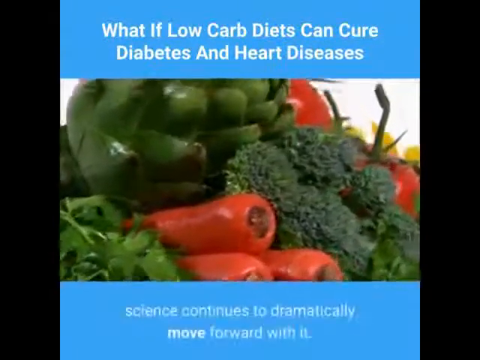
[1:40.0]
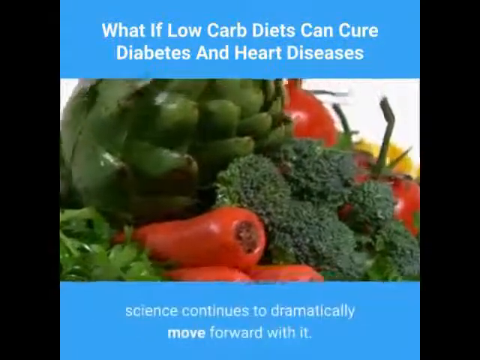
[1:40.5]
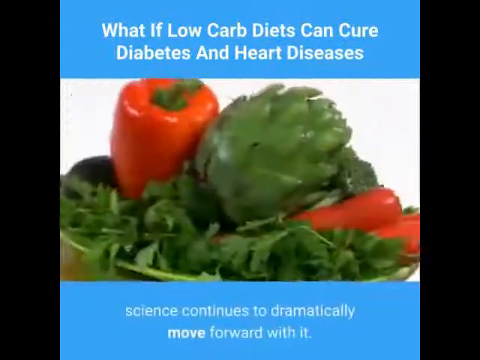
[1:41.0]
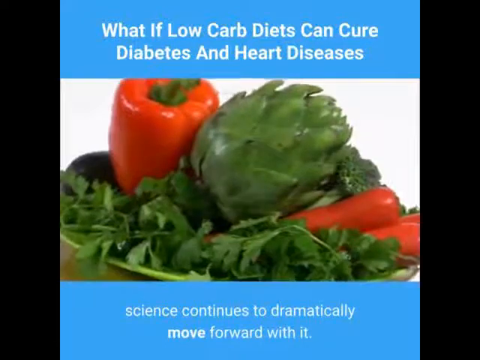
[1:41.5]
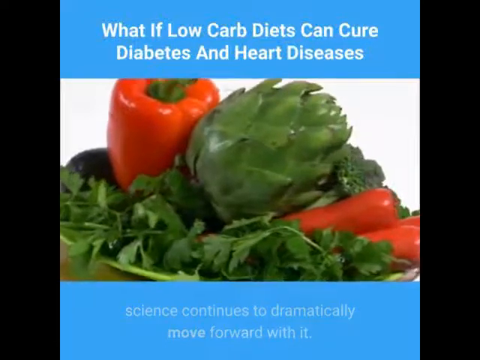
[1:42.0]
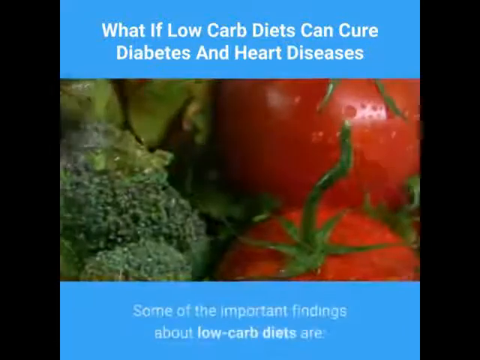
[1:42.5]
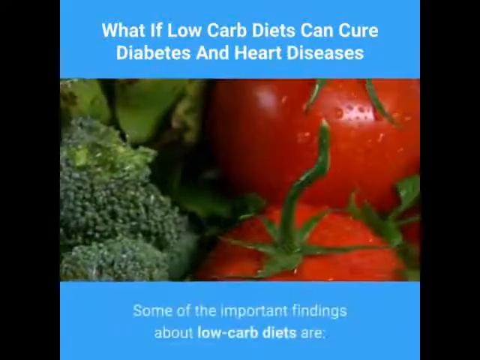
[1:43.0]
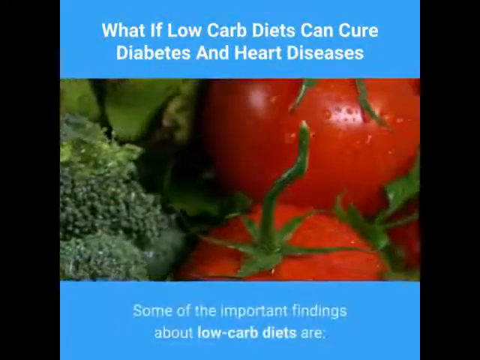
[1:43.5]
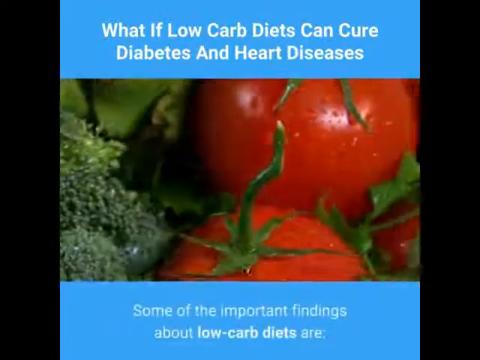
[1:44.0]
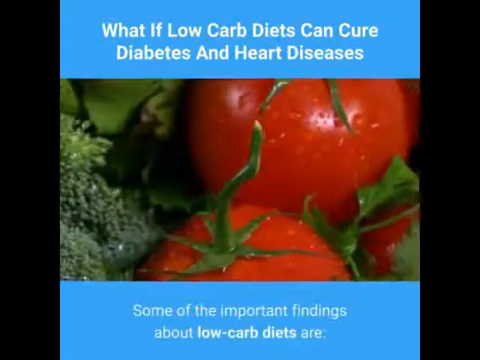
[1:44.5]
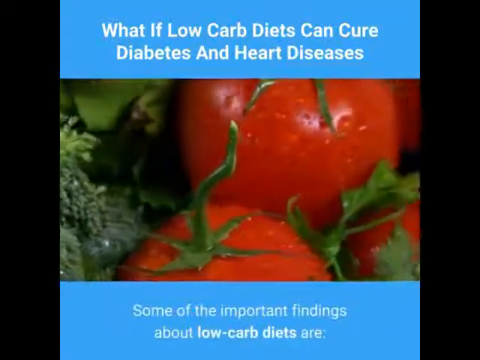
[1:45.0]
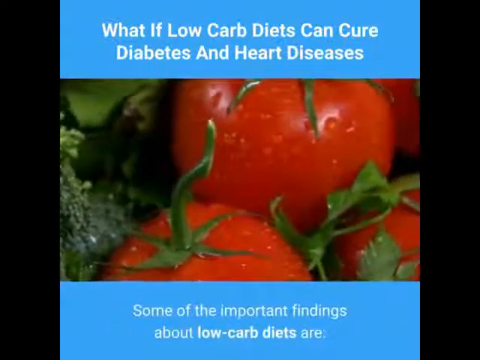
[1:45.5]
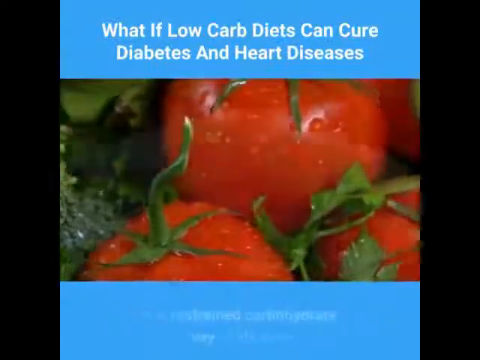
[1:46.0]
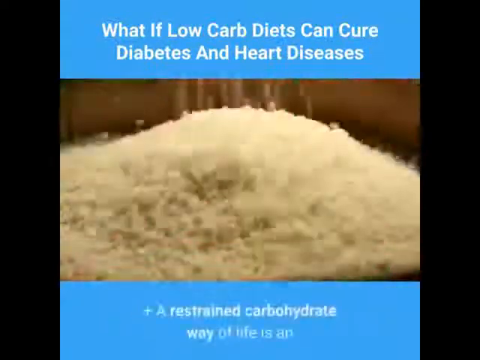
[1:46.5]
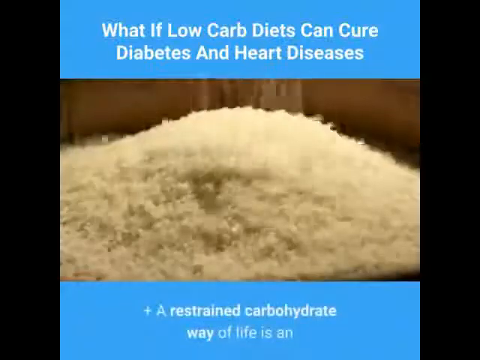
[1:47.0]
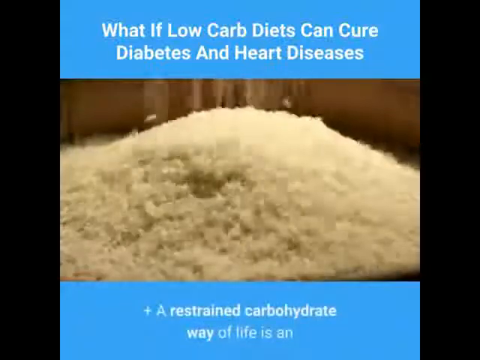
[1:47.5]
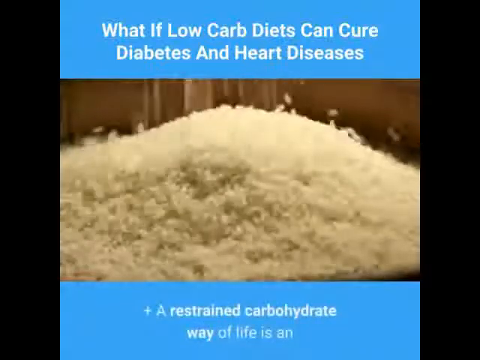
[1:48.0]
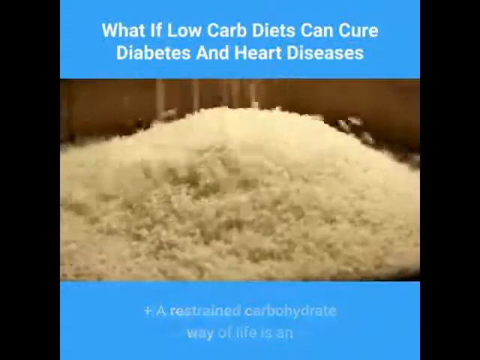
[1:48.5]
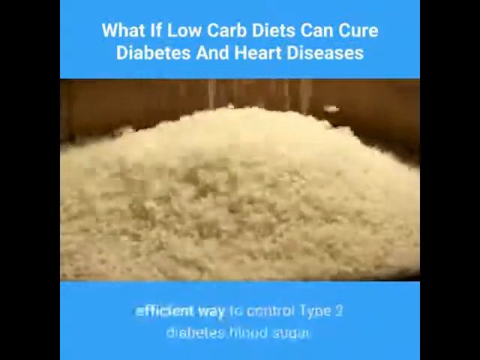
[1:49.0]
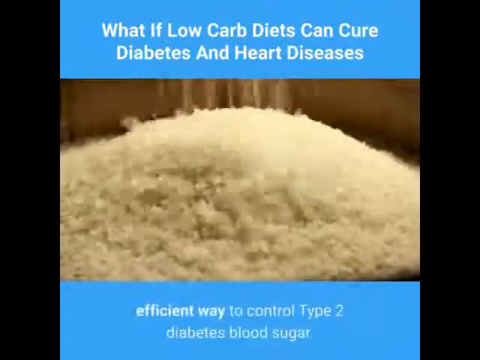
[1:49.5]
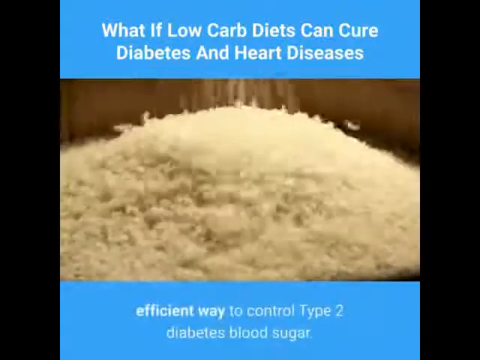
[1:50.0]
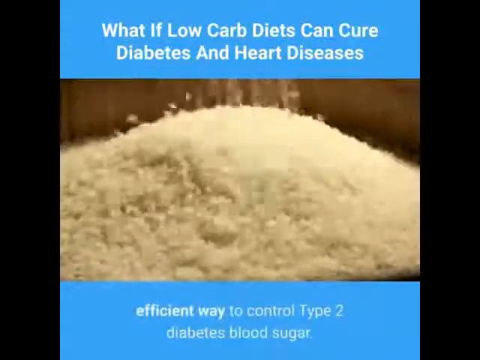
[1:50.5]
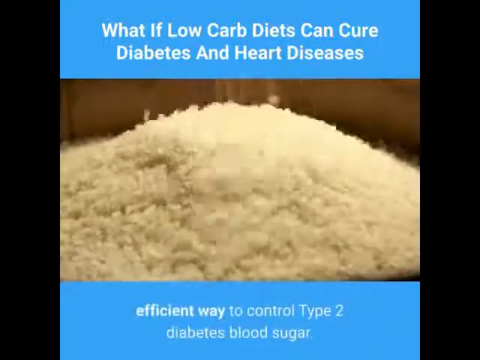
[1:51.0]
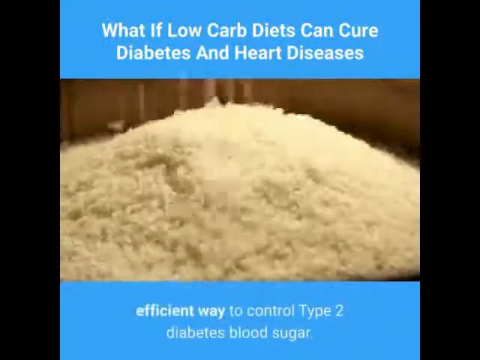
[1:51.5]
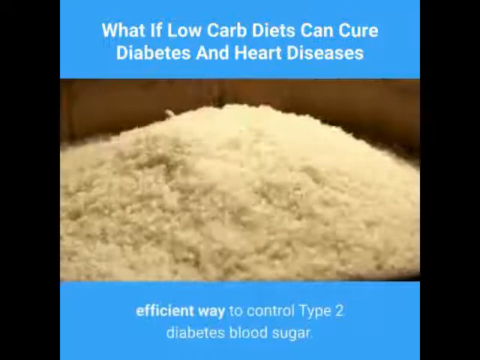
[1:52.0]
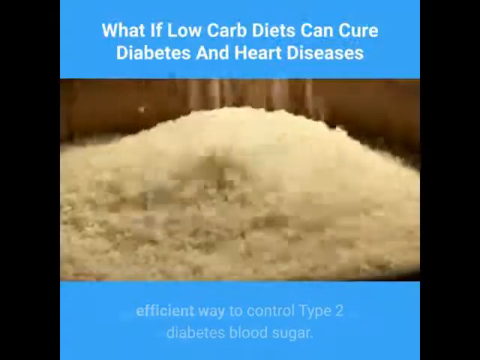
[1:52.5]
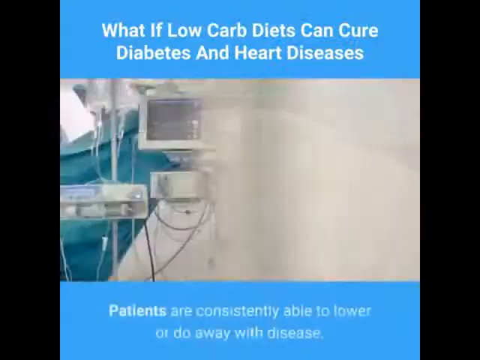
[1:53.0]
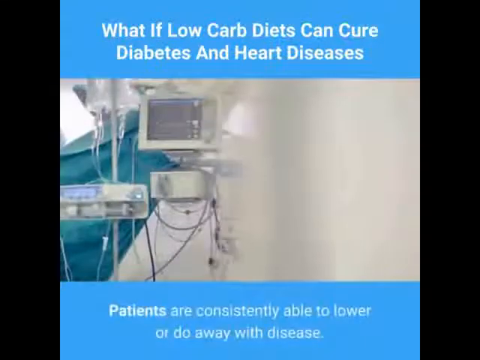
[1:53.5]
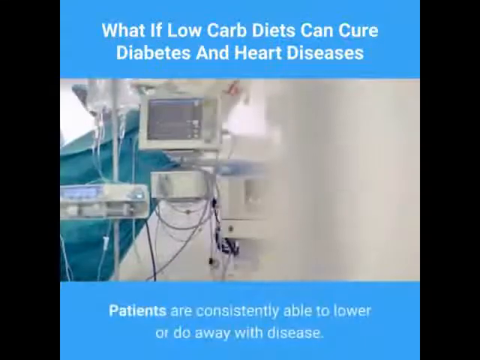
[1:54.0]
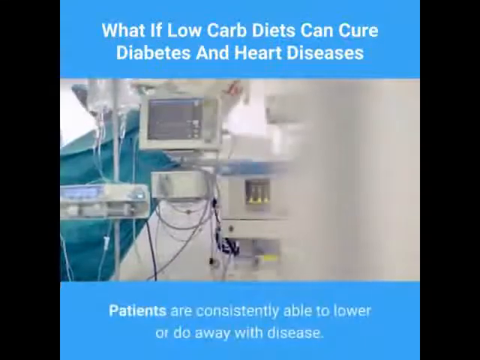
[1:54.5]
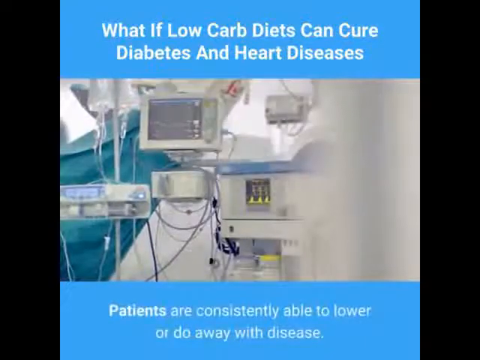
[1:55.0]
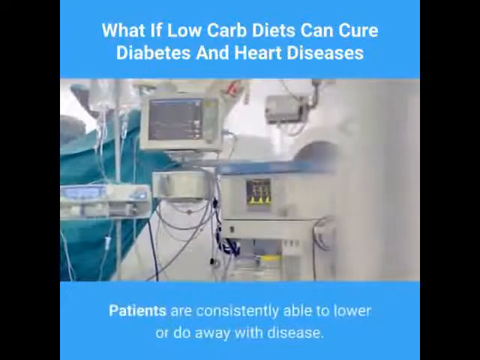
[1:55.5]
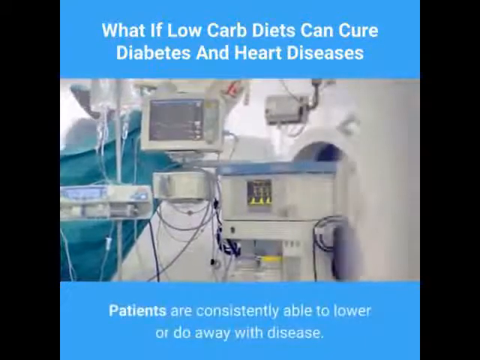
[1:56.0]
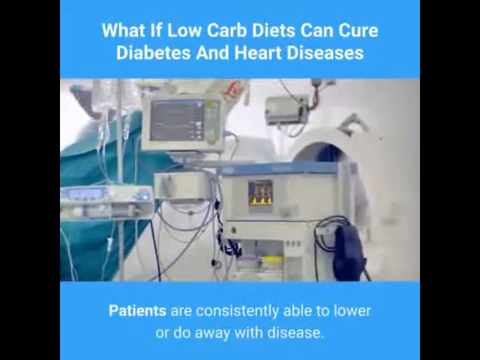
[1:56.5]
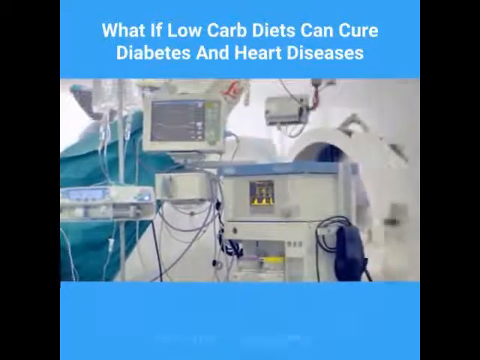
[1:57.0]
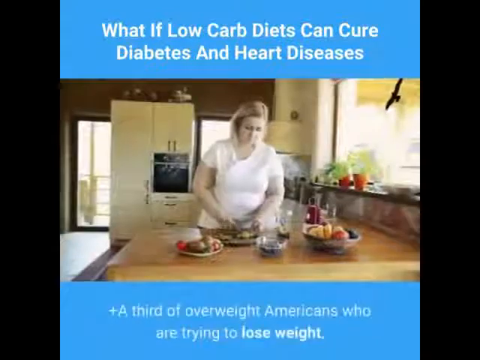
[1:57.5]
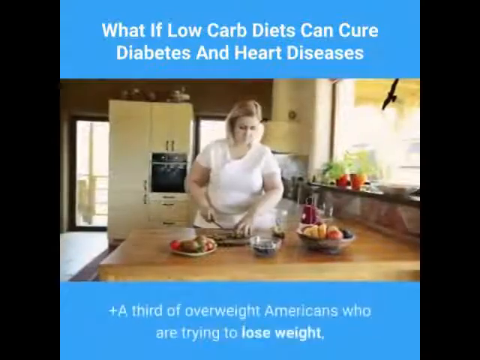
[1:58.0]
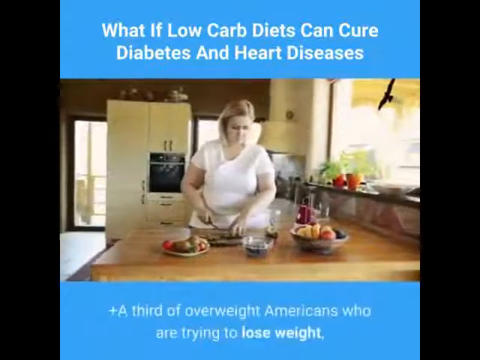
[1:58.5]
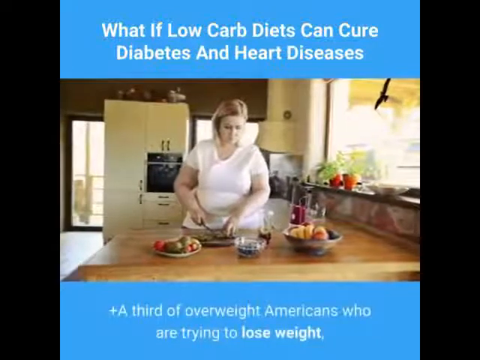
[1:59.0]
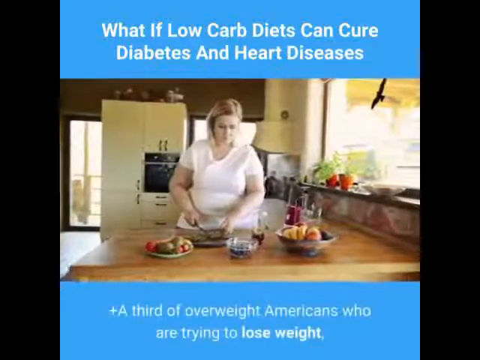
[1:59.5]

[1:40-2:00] A plate of vegetables spins. The tomatoes seem wet, with drops of water on them, and there are also broccoli, carrots and avocado. Rice is poured, forming a mound. Medical equipment in a hospital is shown. A woman at home prepares a healthy meal at her countertop with a big knife; she has little bowls of ingredients, cuts them and places them in a bowl. She is in her kitchen, with the refrigerator behind her and the sink to her side, plants in her window and sunlight visible outside.